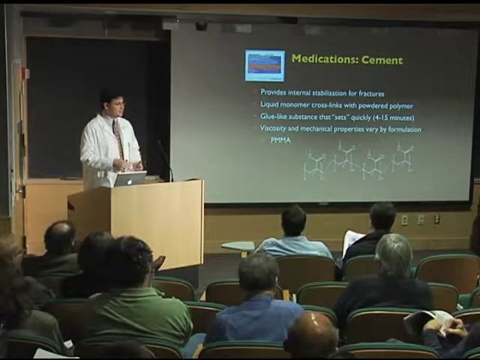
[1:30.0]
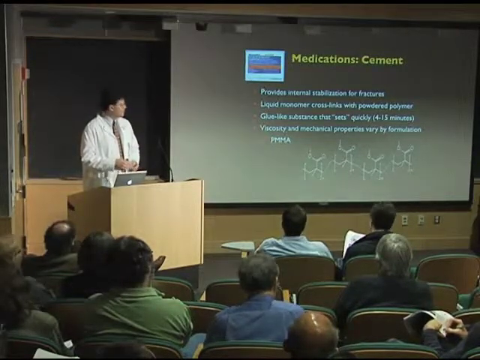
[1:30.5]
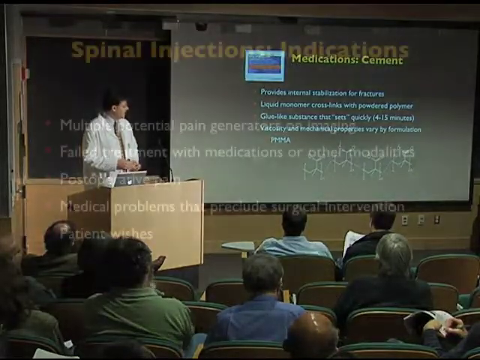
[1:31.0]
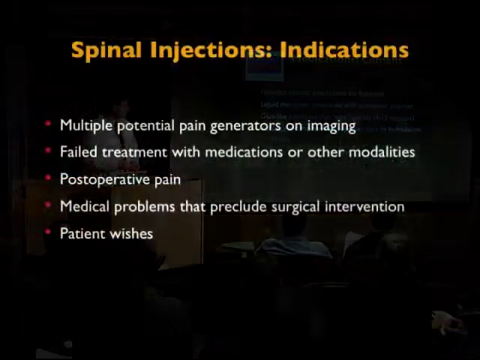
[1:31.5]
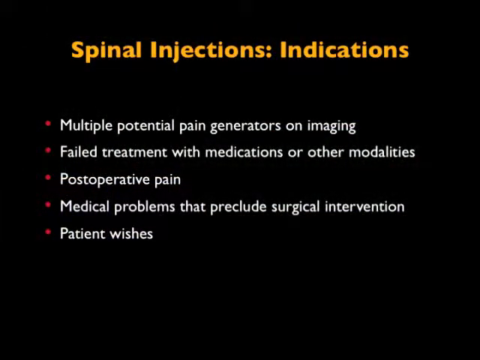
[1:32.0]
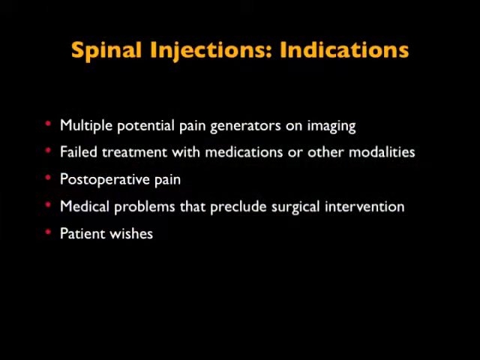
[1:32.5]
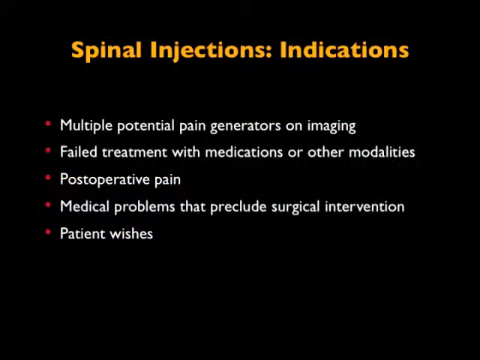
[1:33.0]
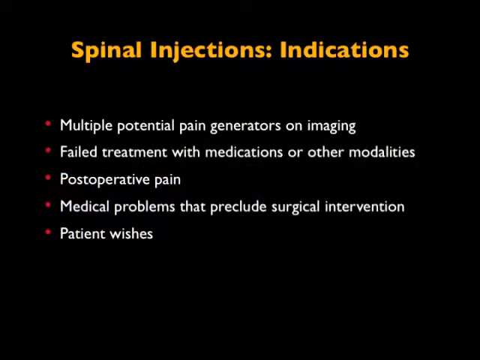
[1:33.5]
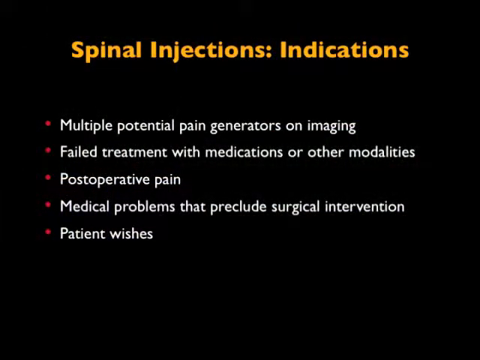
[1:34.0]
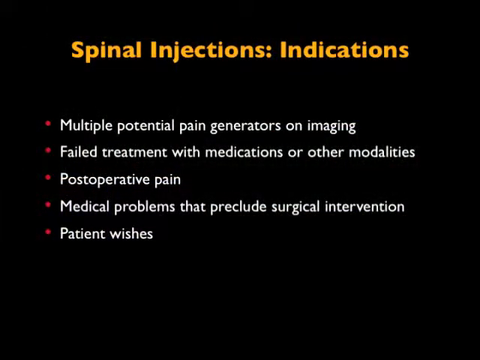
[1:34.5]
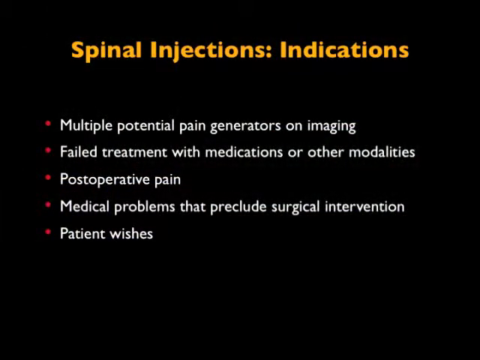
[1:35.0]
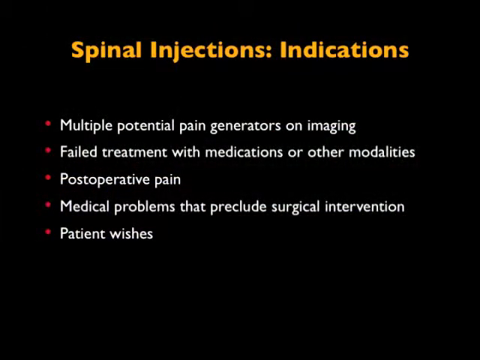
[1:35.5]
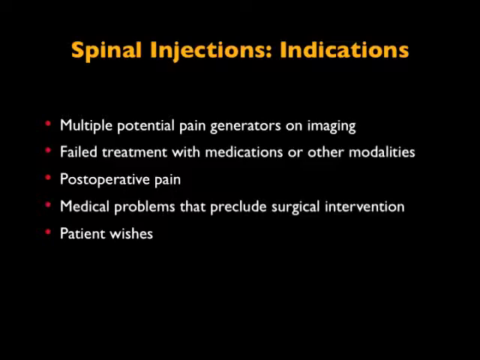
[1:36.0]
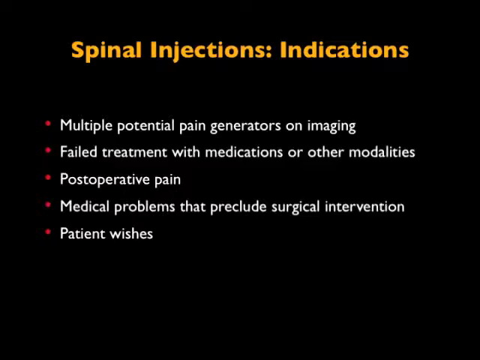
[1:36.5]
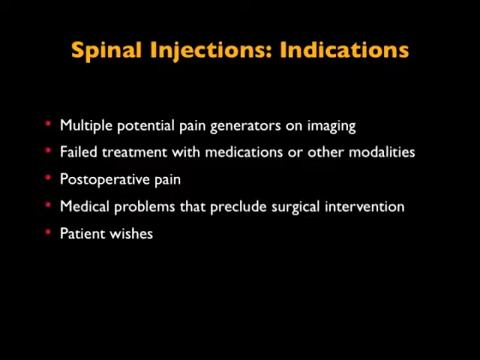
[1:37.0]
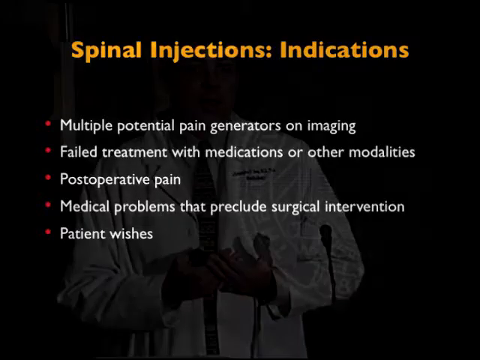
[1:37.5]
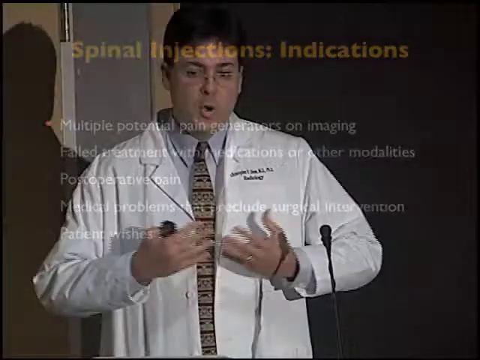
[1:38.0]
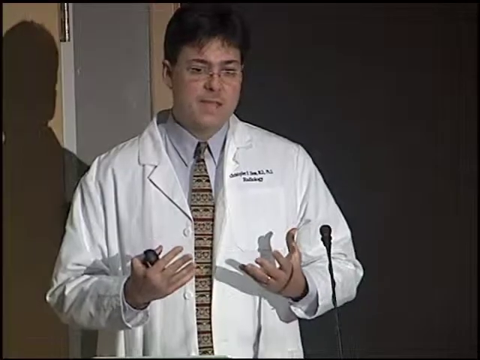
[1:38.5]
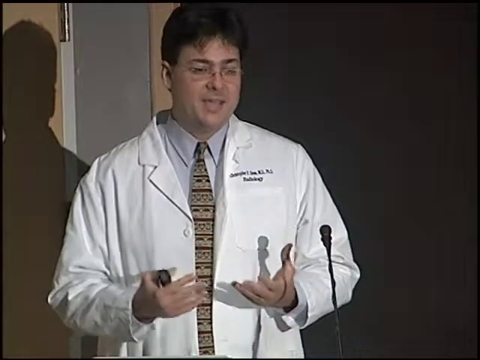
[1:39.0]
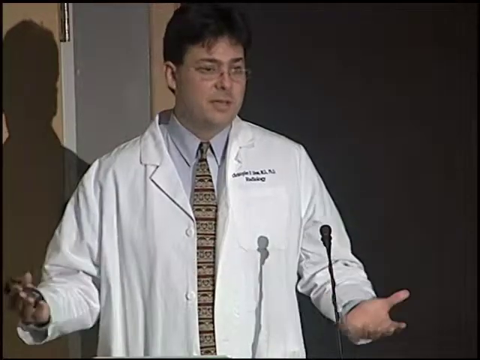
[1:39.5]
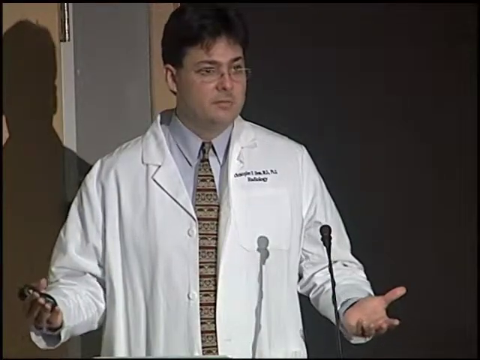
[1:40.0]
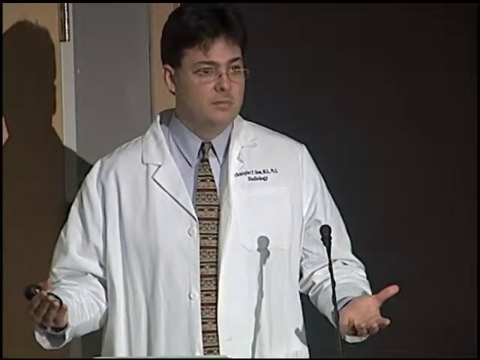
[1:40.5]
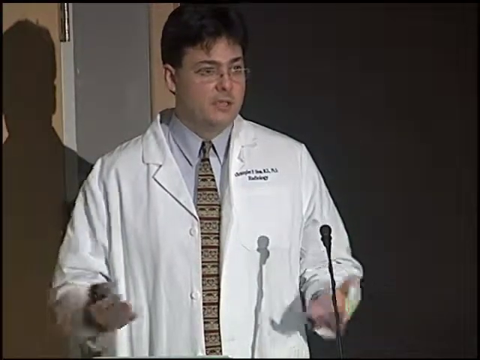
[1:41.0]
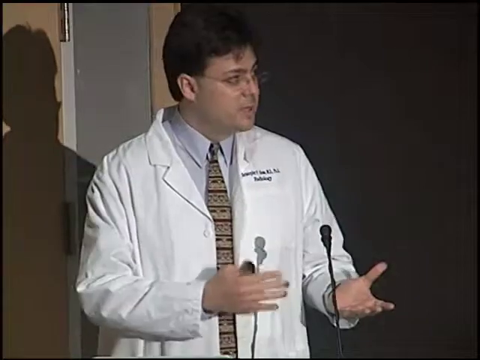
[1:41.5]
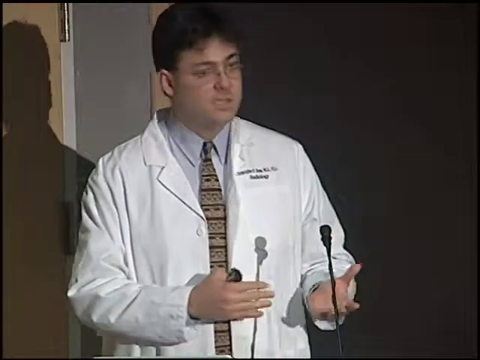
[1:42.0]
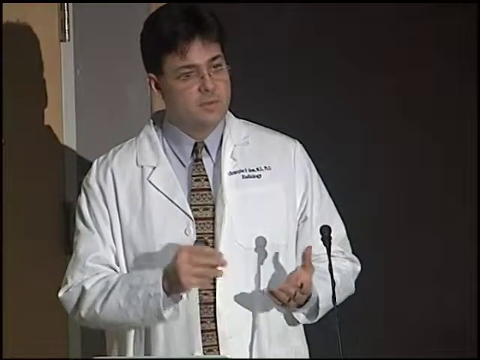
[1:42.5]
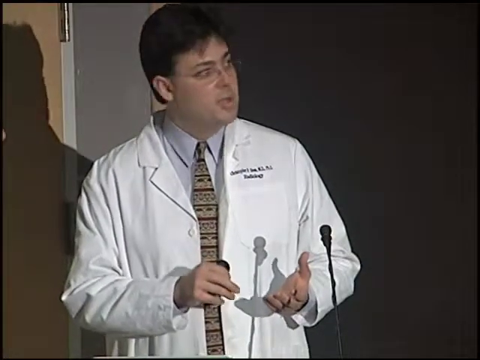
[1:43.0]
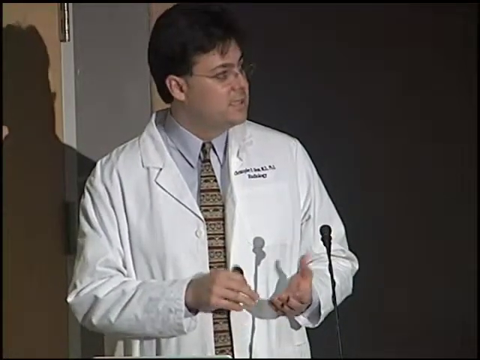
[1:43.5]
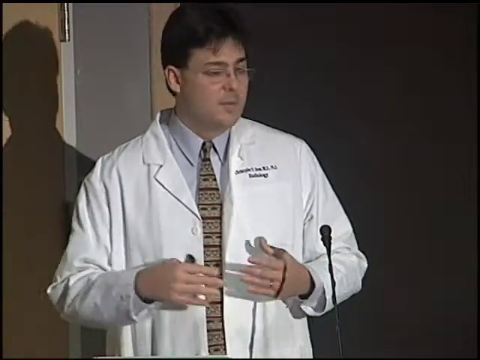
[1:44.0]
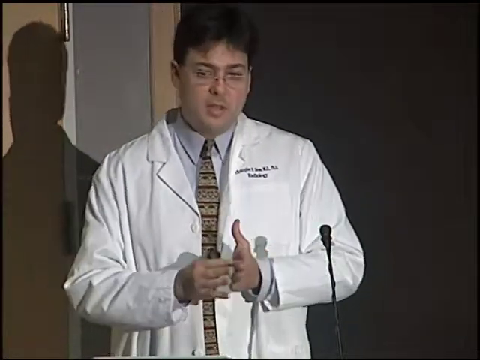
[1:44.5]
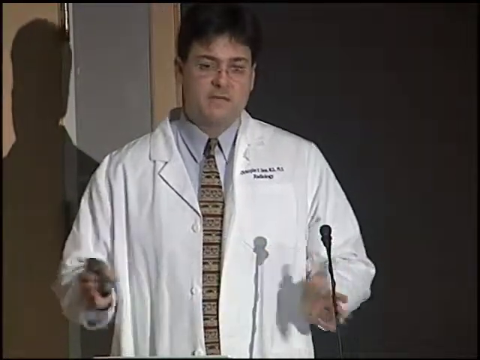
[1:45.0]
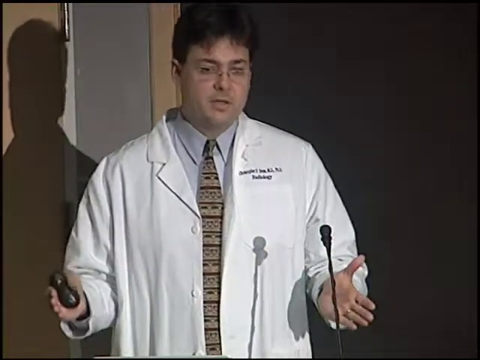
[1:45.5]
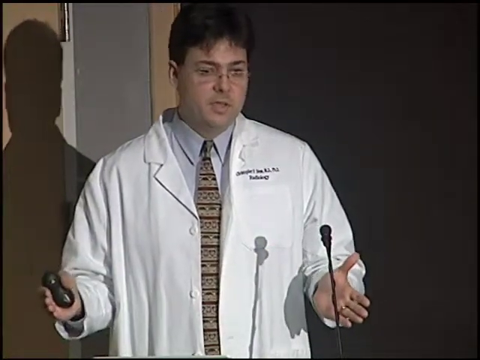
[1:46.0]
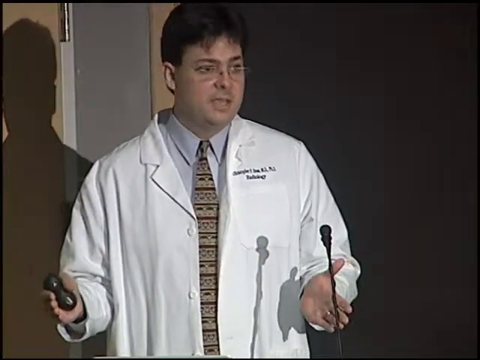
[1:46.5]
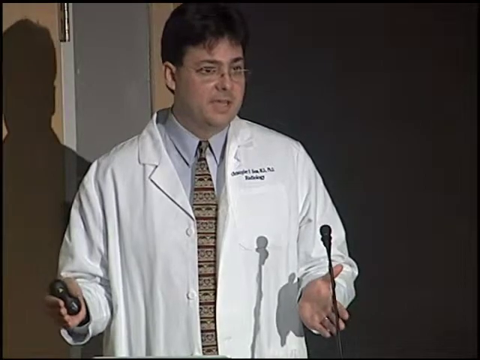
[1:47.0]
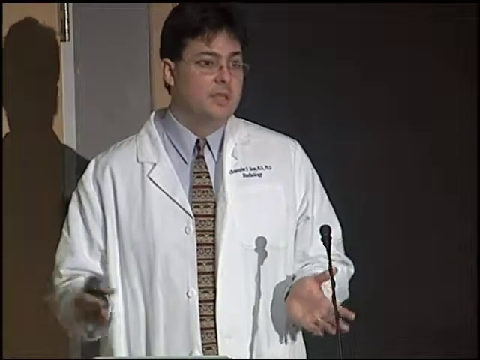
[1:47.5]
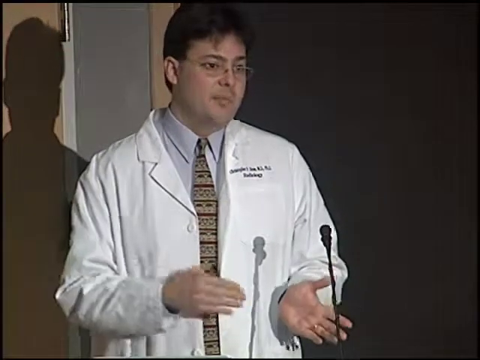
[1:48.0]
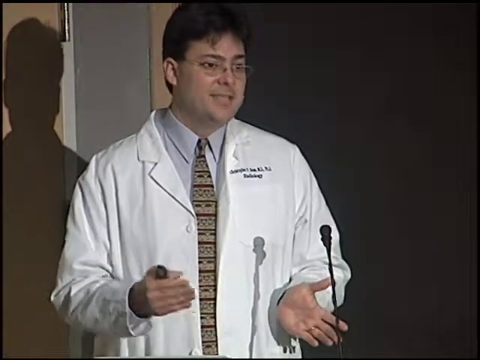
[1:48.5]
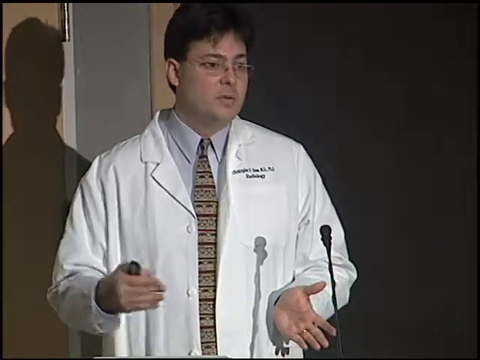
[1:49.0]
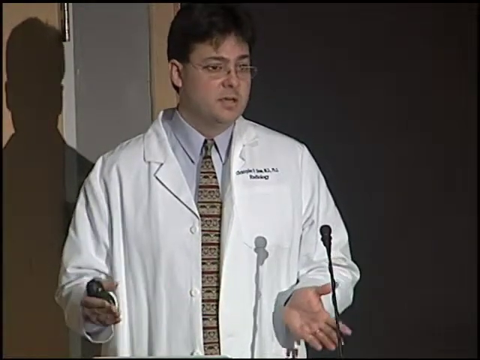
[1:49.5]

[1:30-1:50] The video returns to the doctor speaking, zoomed out so the projector is visible. It then zooms back in so only the slide is visible and he is no longer seen. In orange-yellowish font the slide reads "spinal injections" and "...indications." In white it reads "multiple potential pain generators or imaging," "failed treatment with medications or other modalities," "post-operative pain," "medical problems that preclude surgical intervention," and "patient wishes." The video goes back to the doctor speaking, Christopher P. Hess, MD. He still has the remote; it looks like it is in his left hand, but since he is facing the camera it is in his right hand. He is very expressive, moving his hands up and down in different directions as he talks.